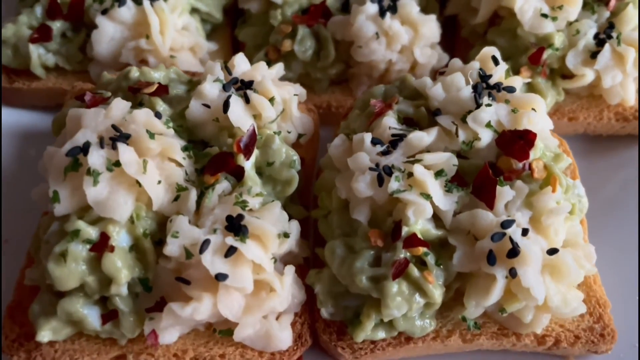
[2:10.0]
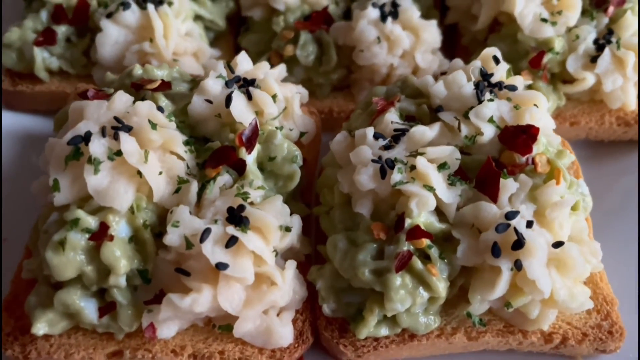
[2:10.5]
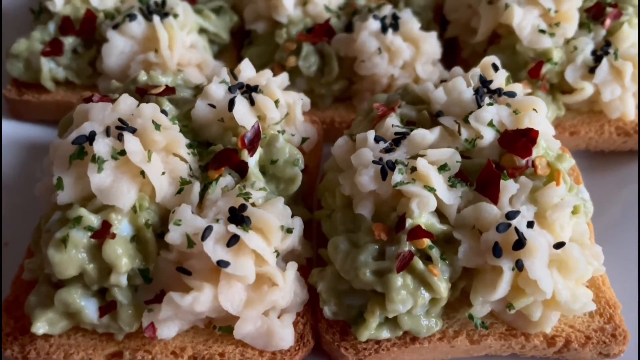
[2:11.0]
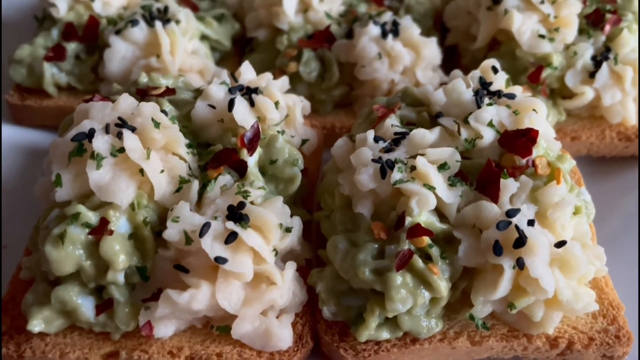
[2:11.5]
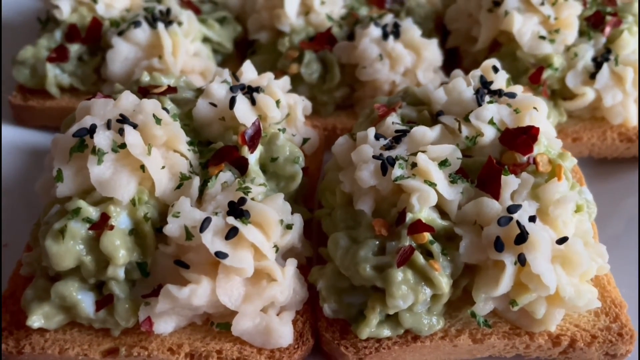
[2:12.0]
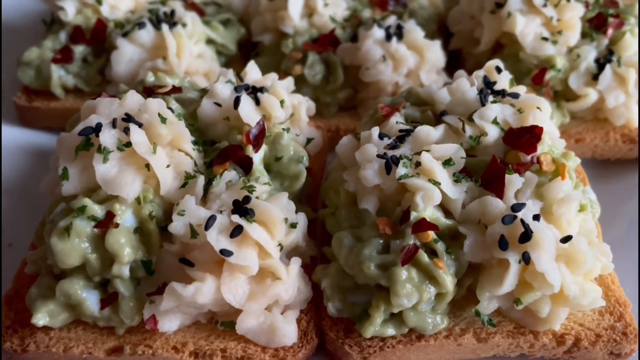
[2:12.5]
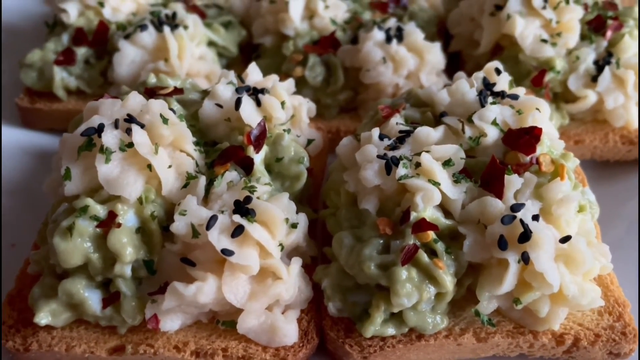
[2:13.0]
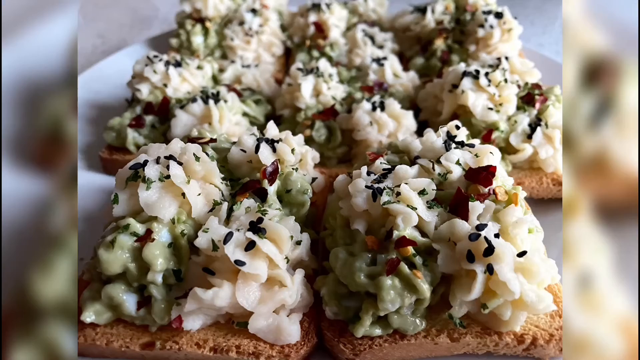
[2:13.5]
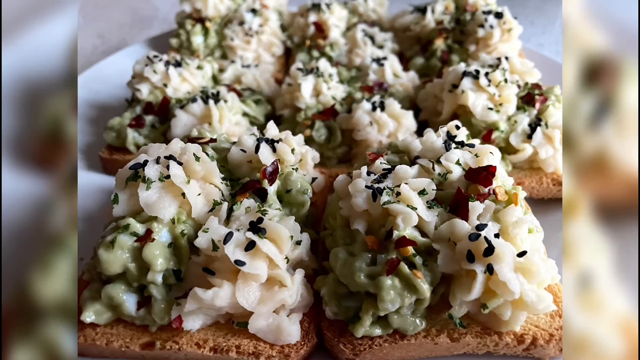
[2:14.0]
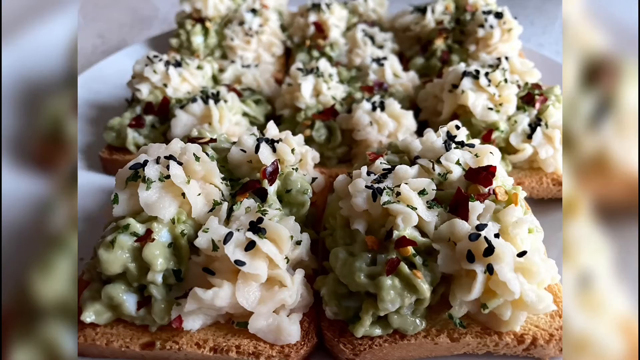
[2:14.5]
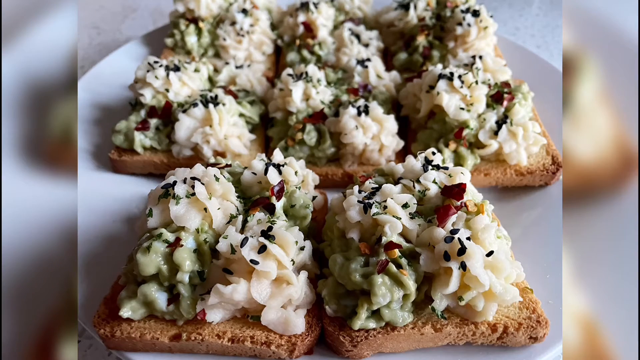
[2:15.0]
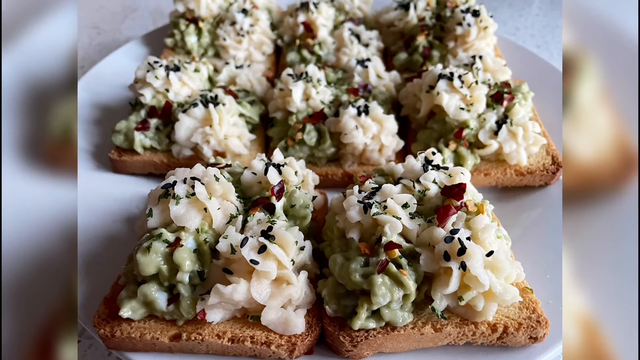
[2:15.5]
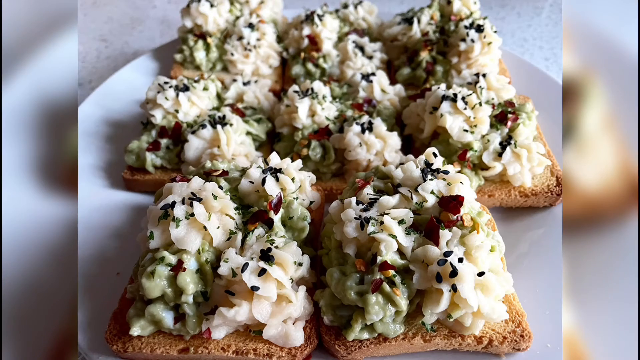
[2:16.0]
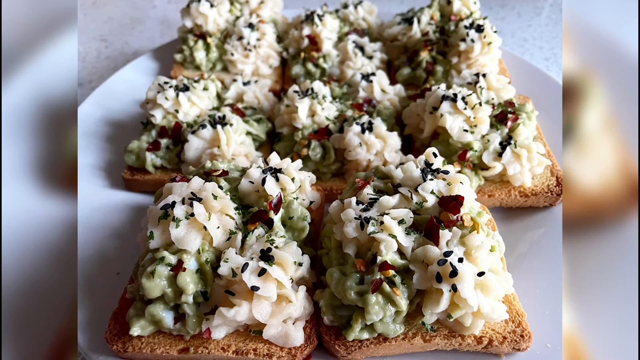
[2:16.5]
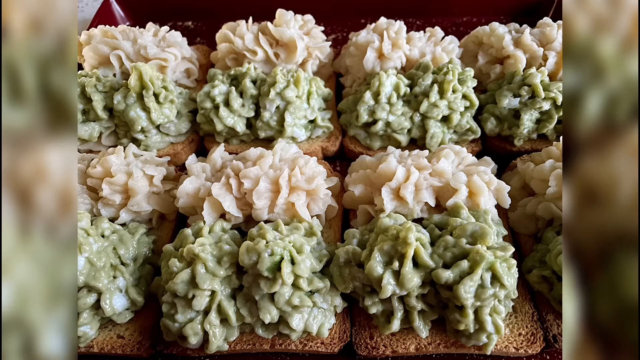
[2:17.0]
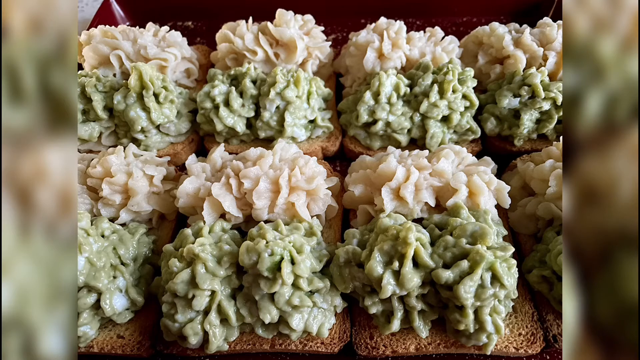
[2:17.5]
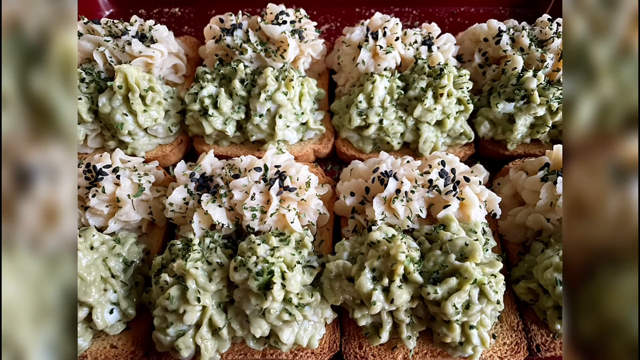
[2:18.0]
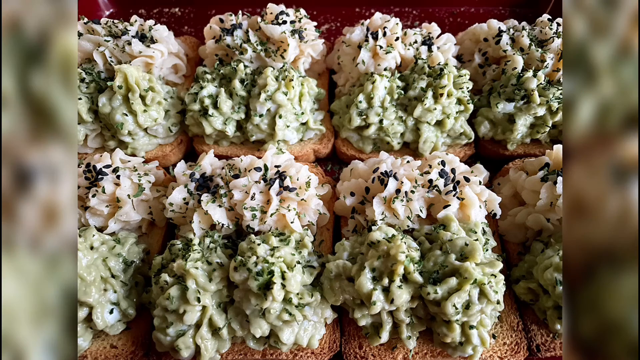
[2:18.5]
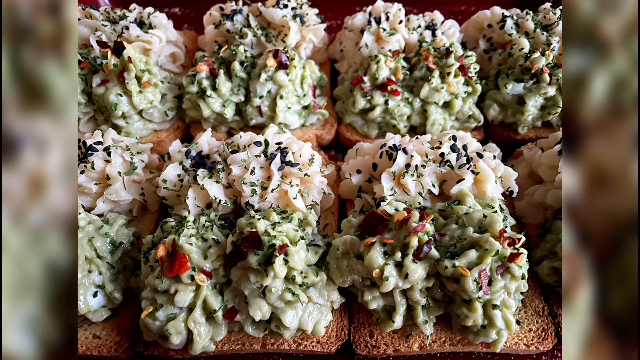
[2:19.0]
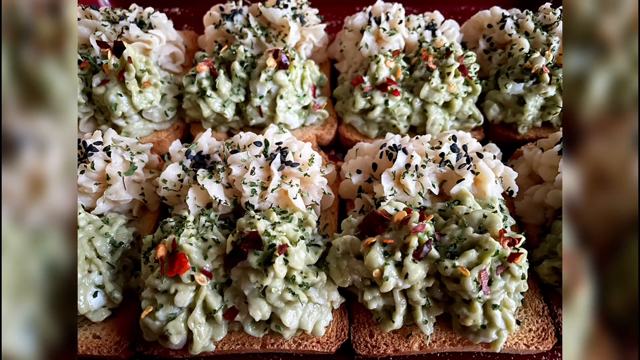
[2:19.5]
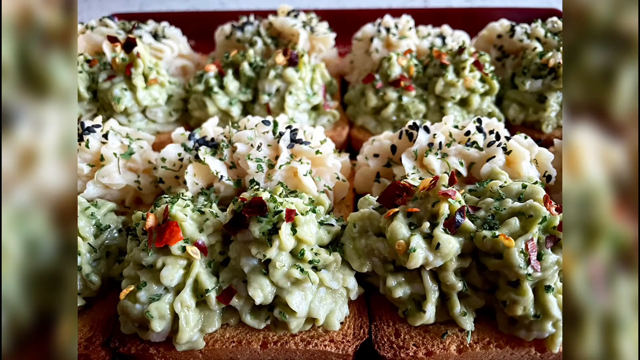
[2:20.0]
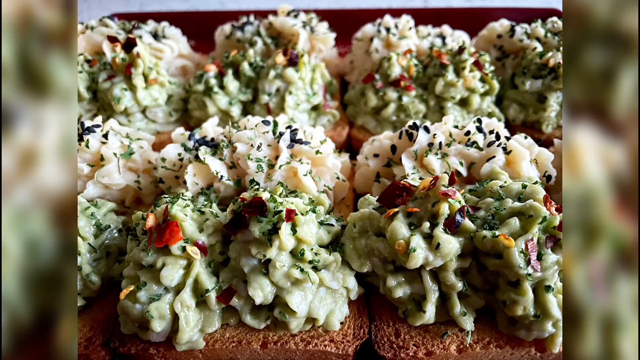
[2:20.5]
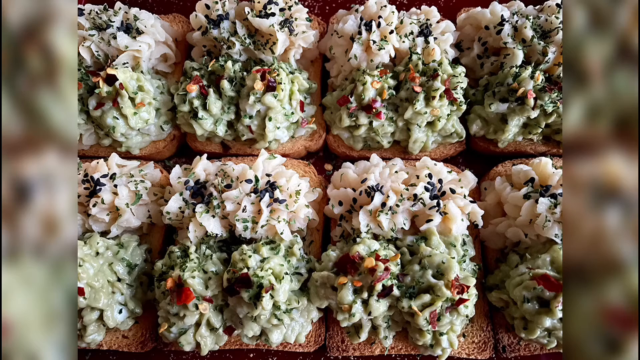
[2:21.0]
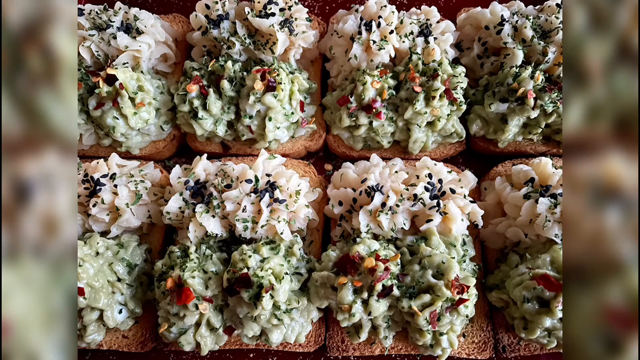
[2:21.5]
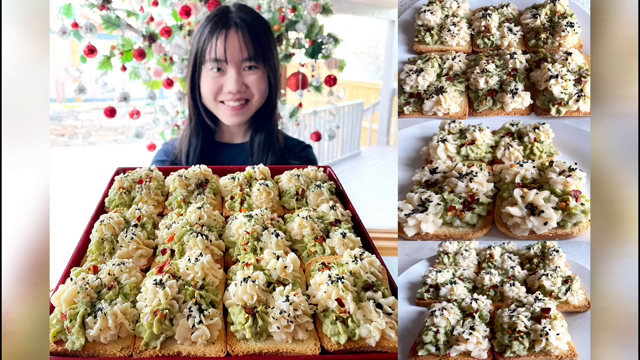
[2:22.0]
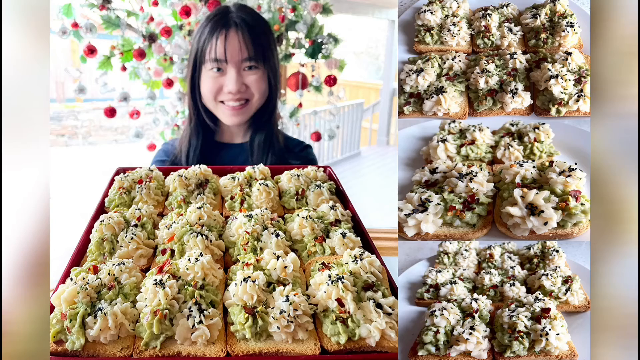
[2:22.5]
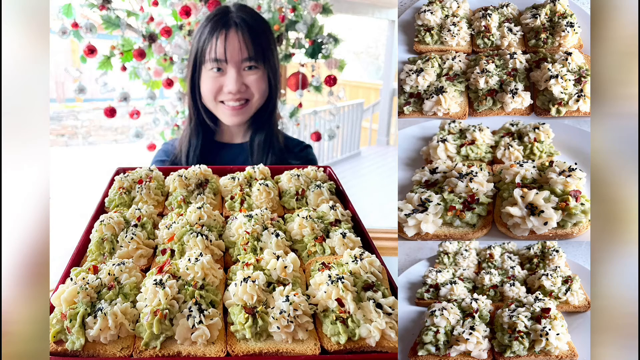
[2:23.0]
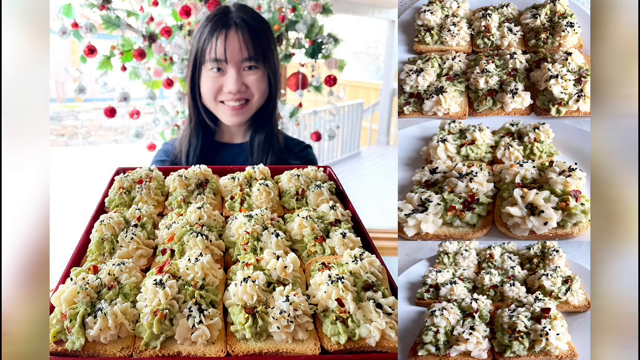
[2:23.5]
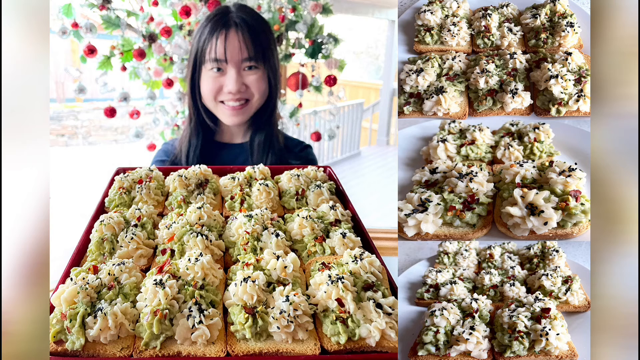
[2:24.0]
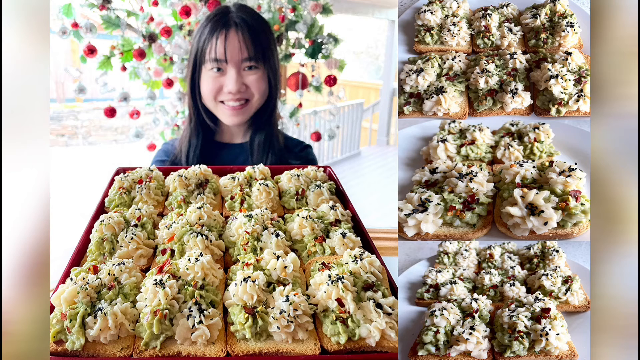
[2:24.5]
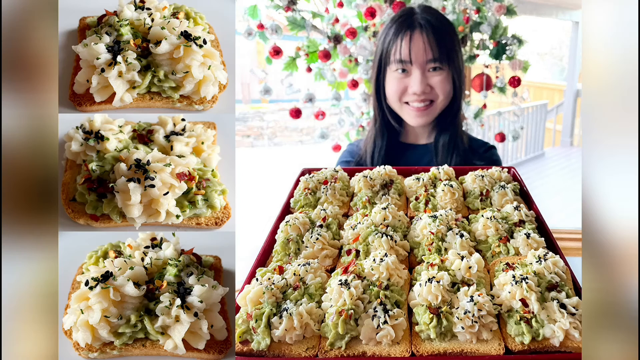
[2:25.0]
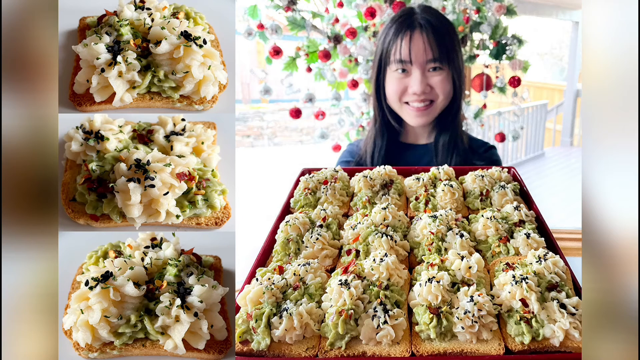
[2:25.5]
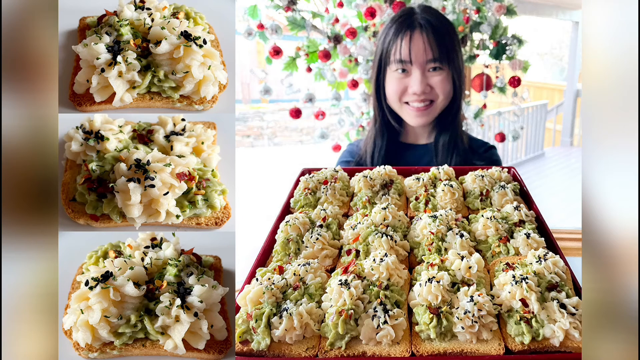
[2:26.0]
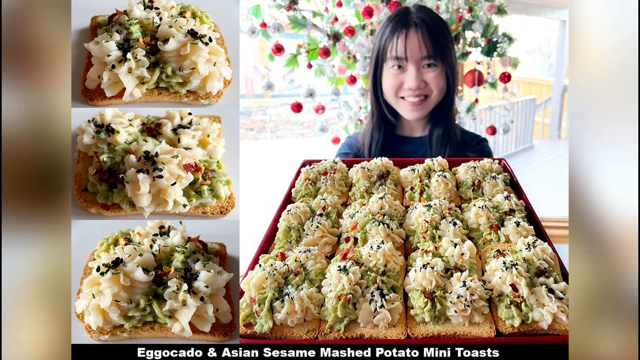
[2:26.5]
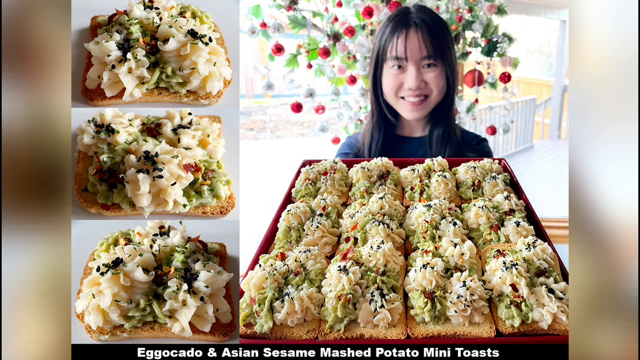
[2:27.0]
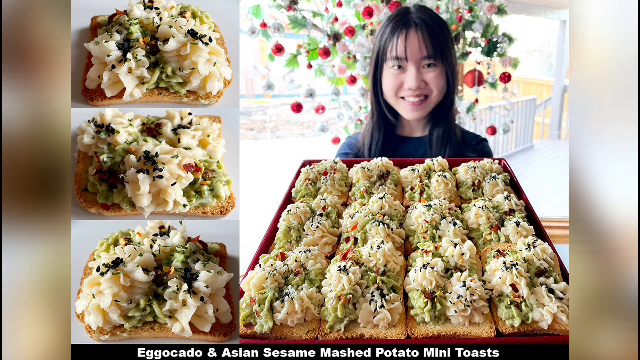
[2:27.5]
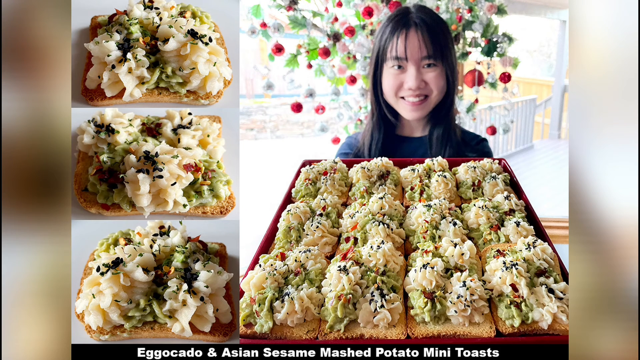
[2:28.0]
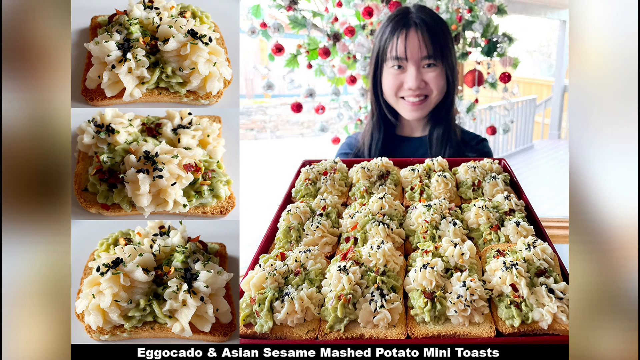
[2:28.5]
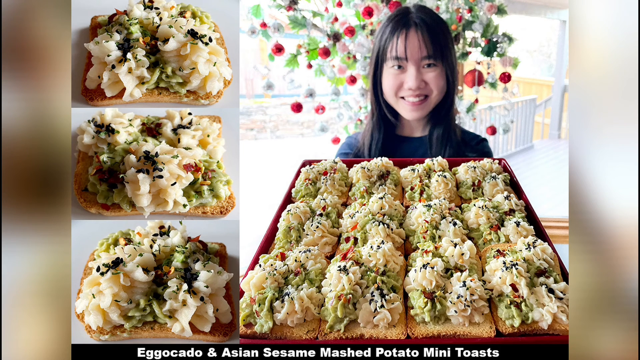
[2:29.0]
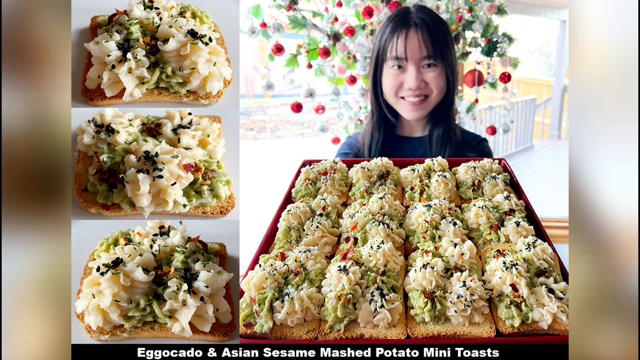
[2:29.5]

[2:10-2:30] Five pieces of mini toast topped with egg-ocado and potato mixture and red and black peppers are organized into two rows: the top row has three pieces in three columns, and the bottom row has two pieces. The camera pans down to show the whole white plate. An image of eight pieces of mini toast on the white plate at a new angle follows, then another image of the eight pieces at another new angle. Next, eight mini toasts are on a red tray, organized into two rows of four columns each, and the mini toast is sprinkled with black and red peppers. Two images show the mini toast on the red tray at different angles. Then the woman in the black shirt is shown smiling and holding the red tray on the left side of the frame, with three images of several pieces of mini toast on white plates on the right side. Next, the woman holding the red tray is on the right side, with three images of single pieces of mini toast on a white plate on the left side. White text at the bottom says "egg-ocado Asian sesame smashed potato mini toast."